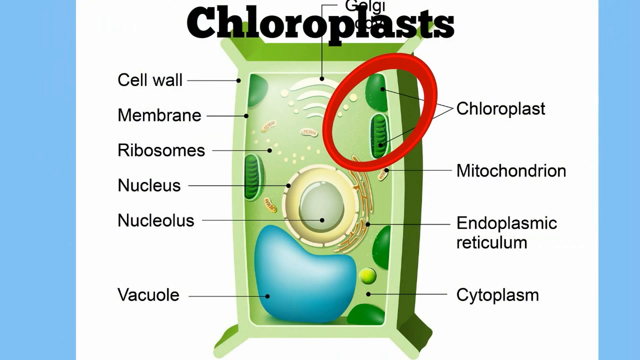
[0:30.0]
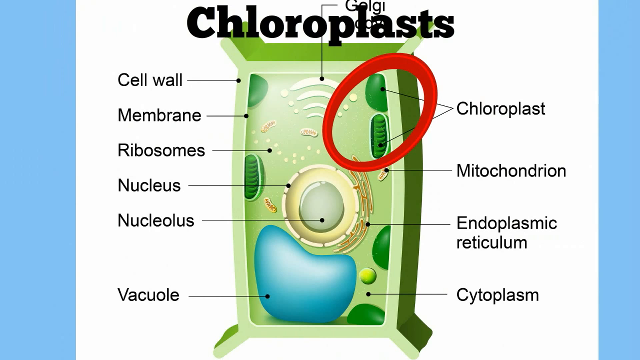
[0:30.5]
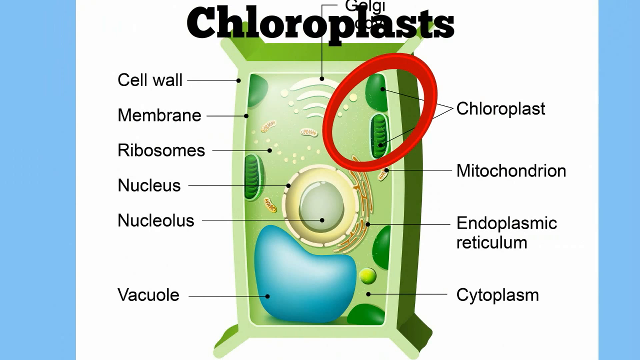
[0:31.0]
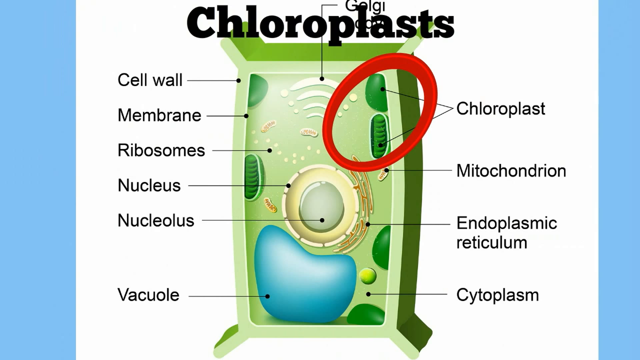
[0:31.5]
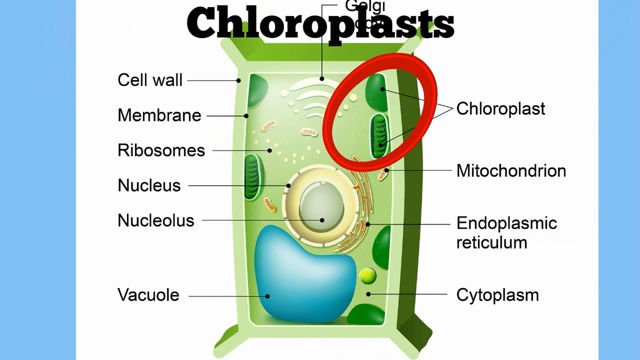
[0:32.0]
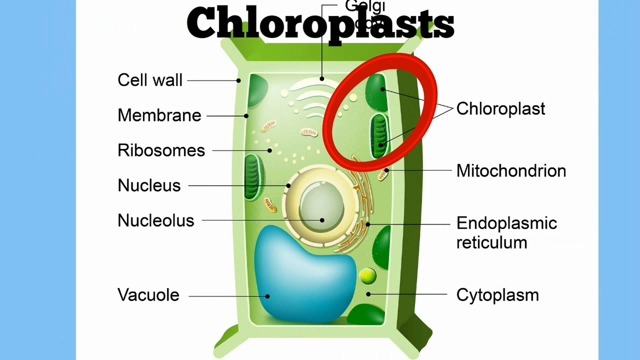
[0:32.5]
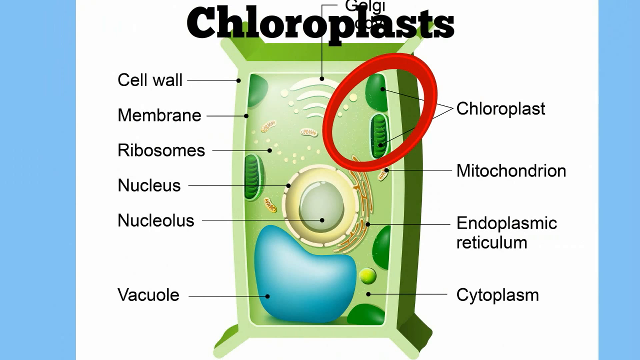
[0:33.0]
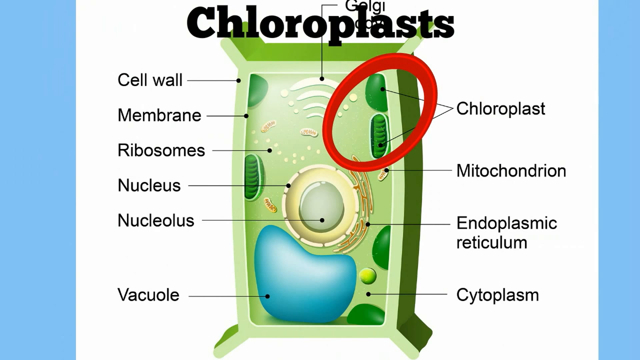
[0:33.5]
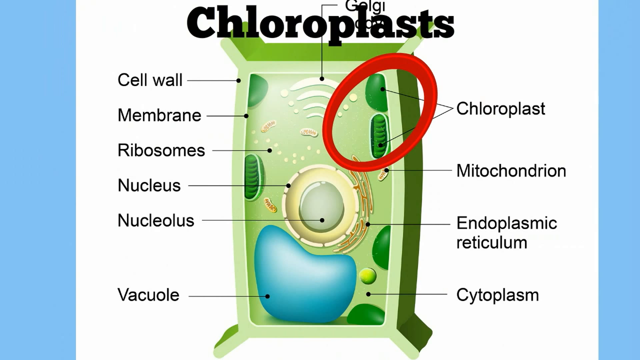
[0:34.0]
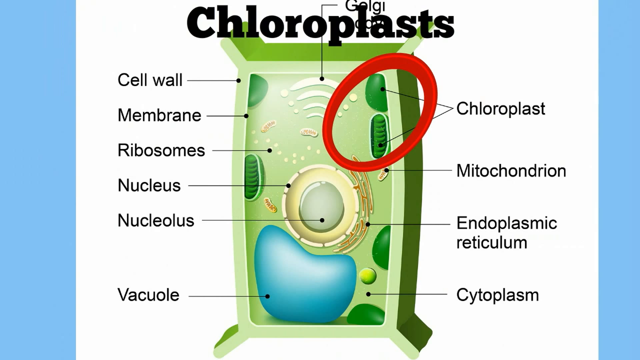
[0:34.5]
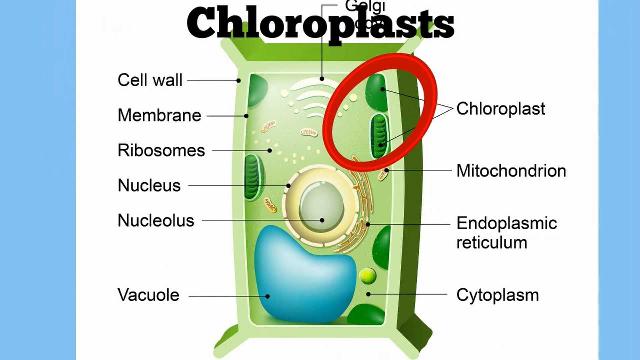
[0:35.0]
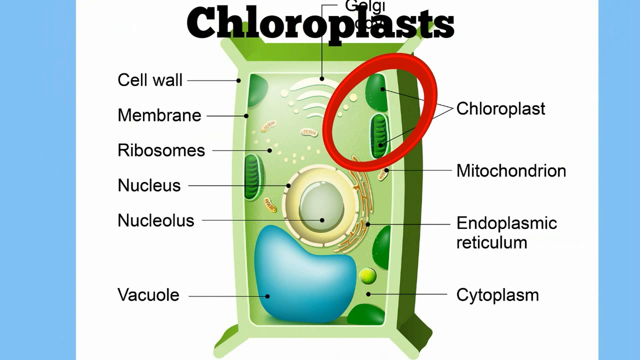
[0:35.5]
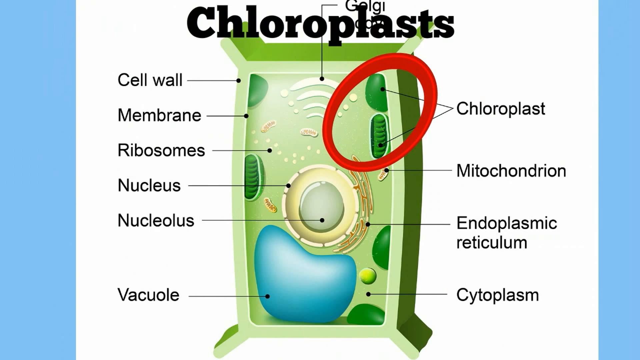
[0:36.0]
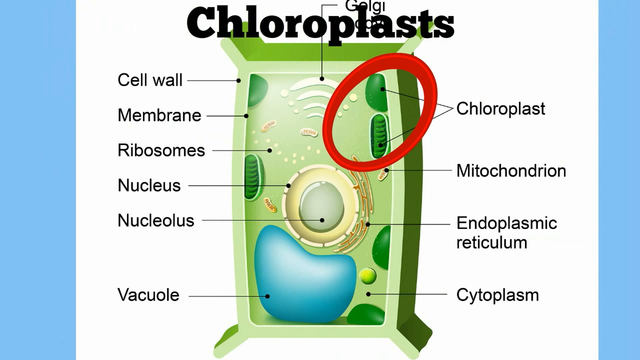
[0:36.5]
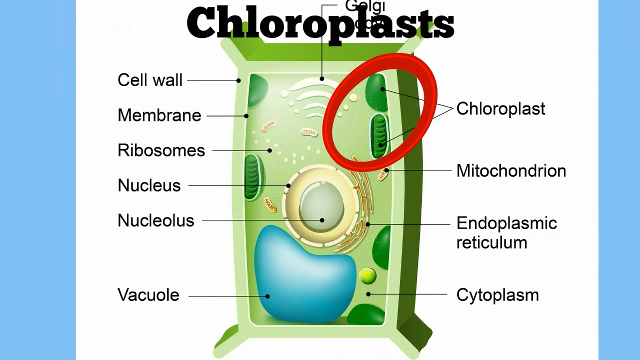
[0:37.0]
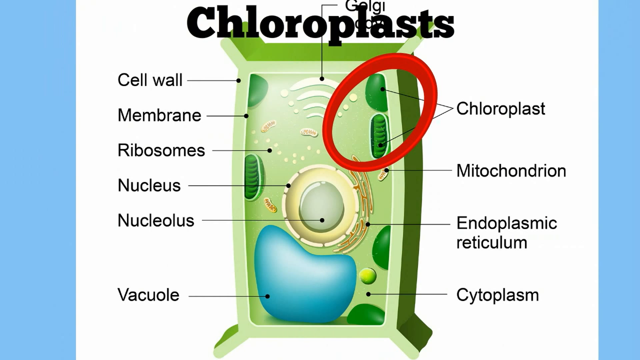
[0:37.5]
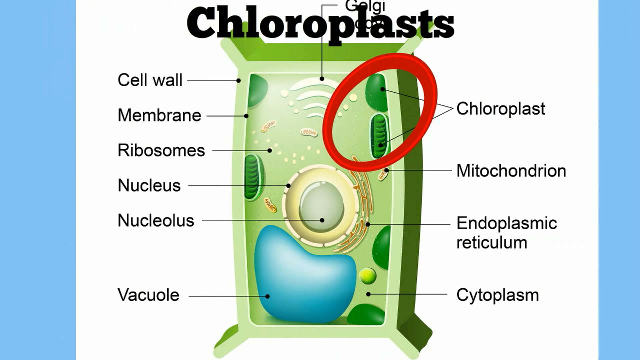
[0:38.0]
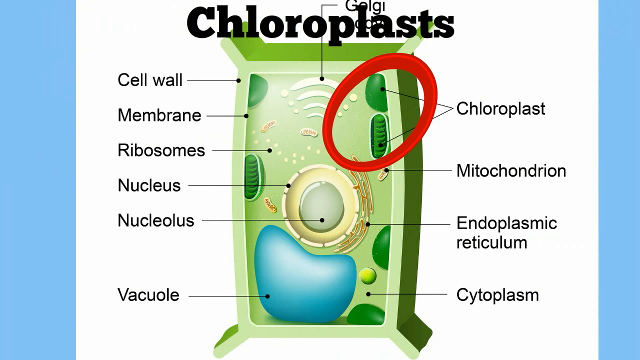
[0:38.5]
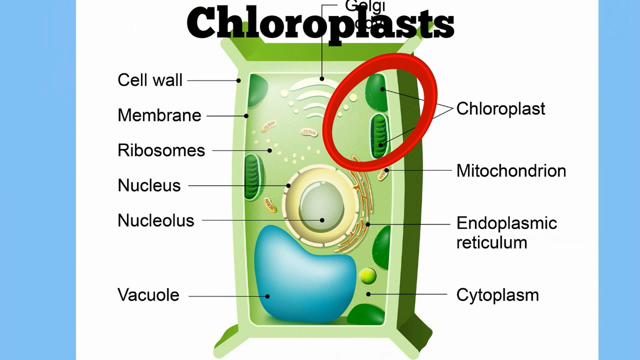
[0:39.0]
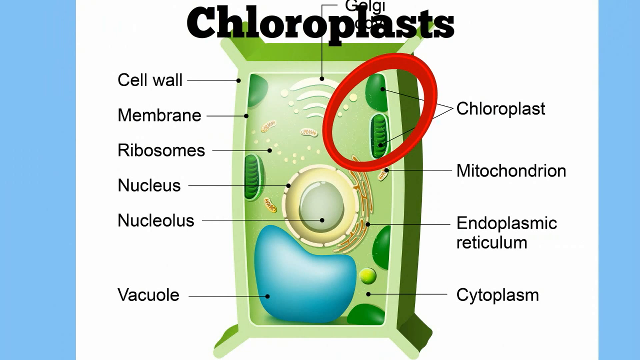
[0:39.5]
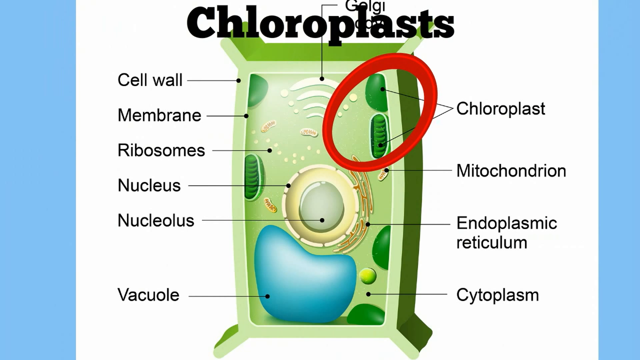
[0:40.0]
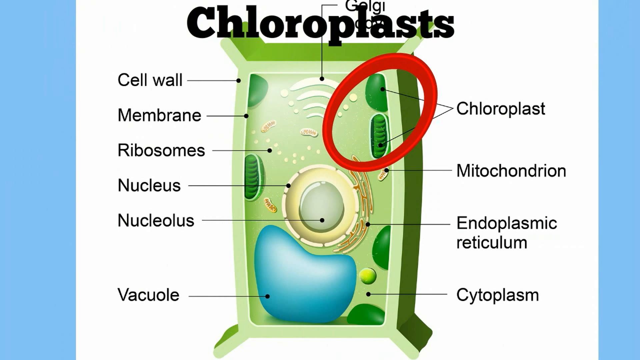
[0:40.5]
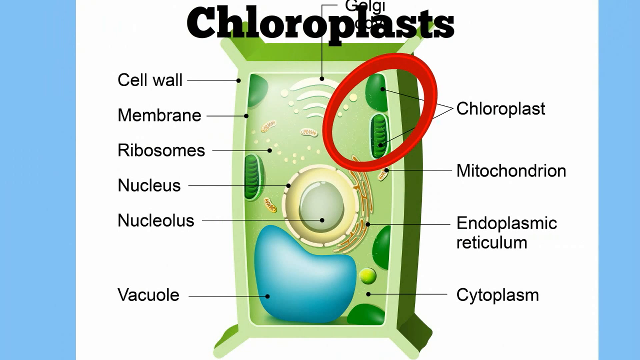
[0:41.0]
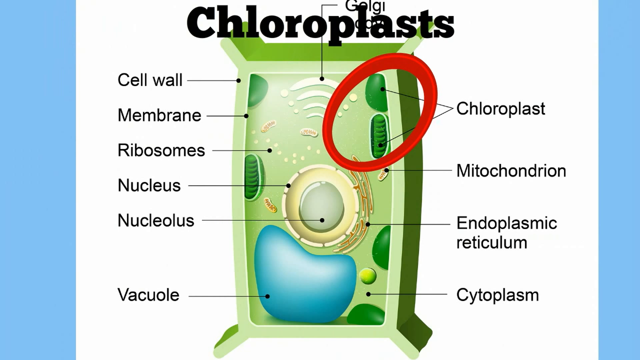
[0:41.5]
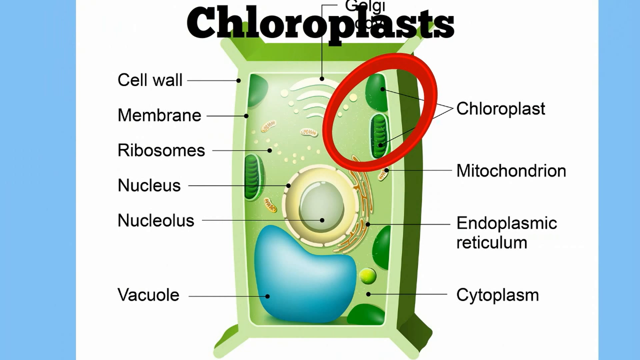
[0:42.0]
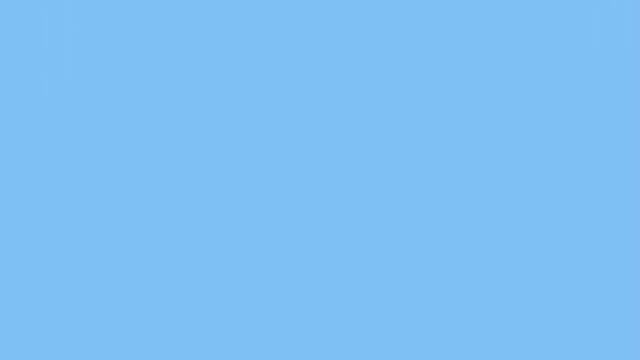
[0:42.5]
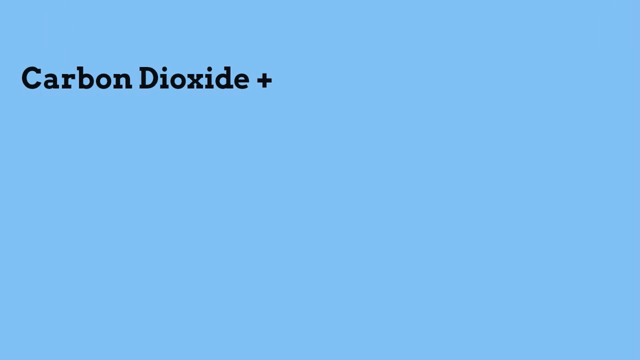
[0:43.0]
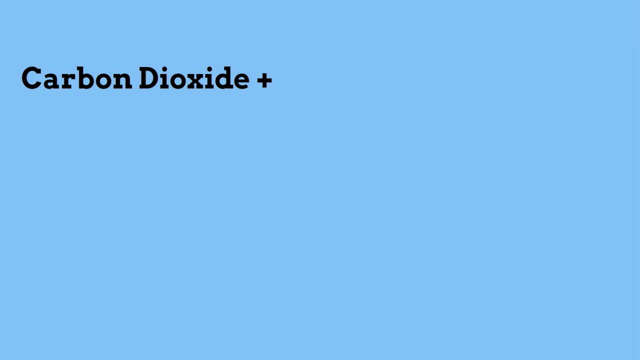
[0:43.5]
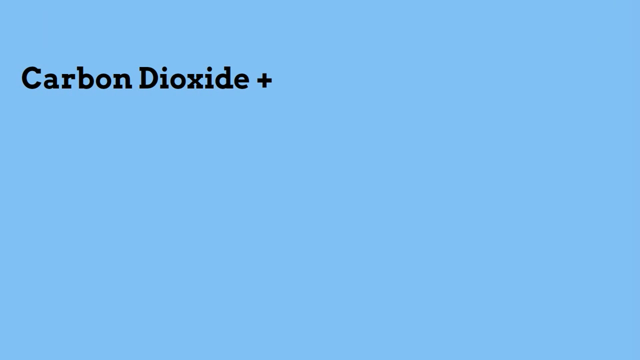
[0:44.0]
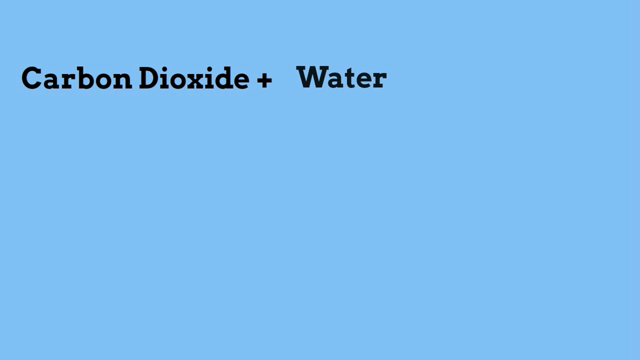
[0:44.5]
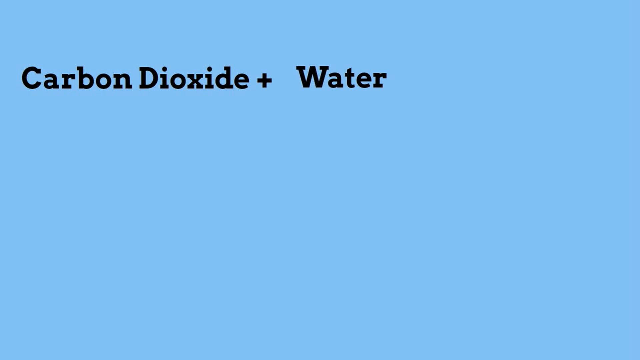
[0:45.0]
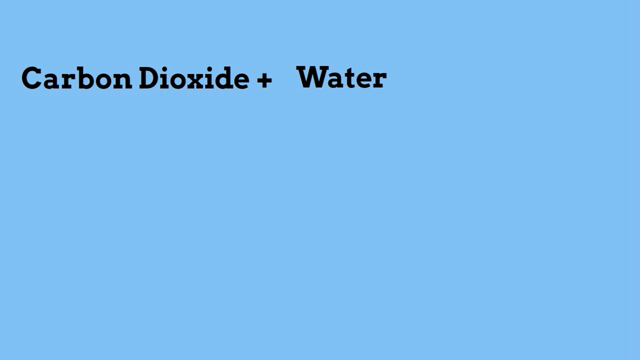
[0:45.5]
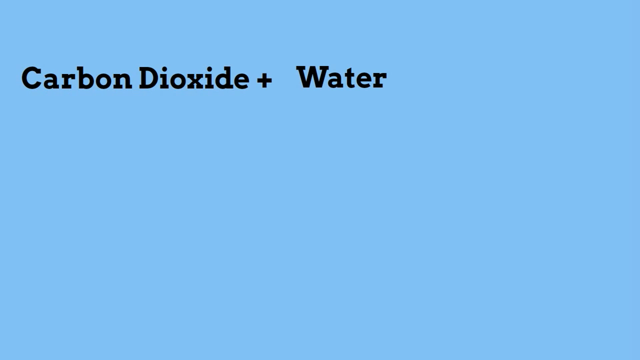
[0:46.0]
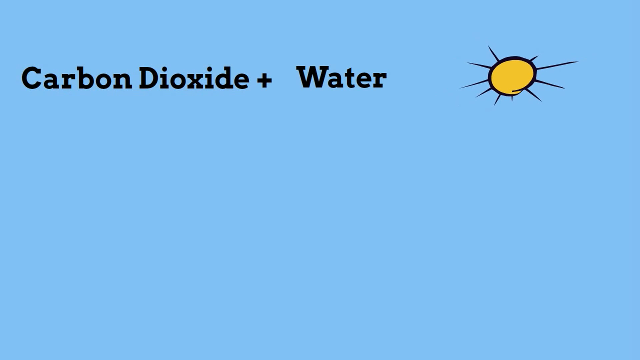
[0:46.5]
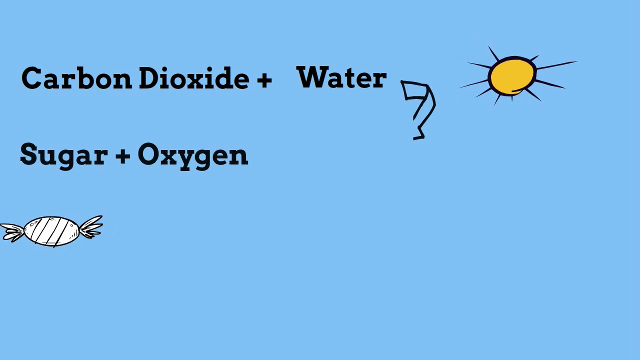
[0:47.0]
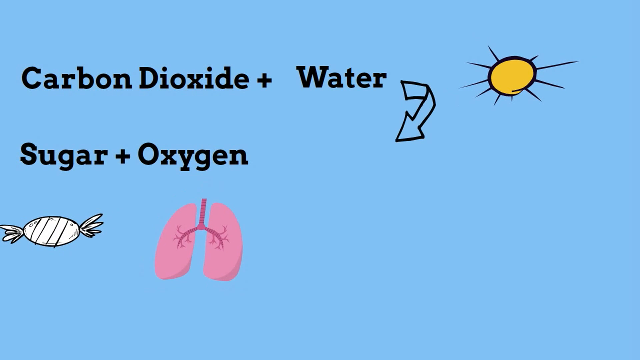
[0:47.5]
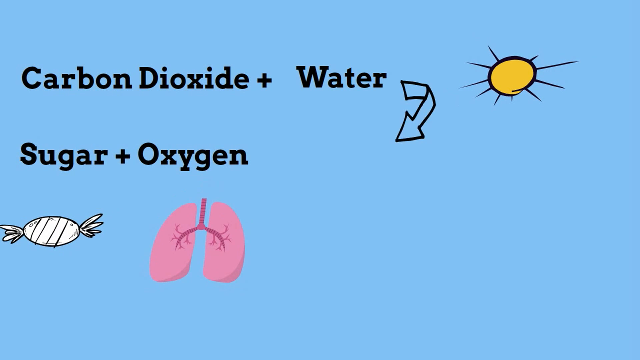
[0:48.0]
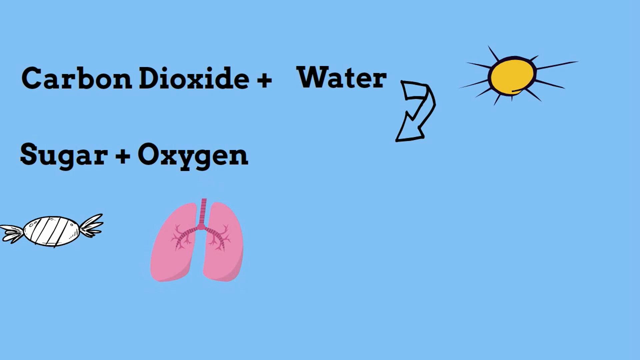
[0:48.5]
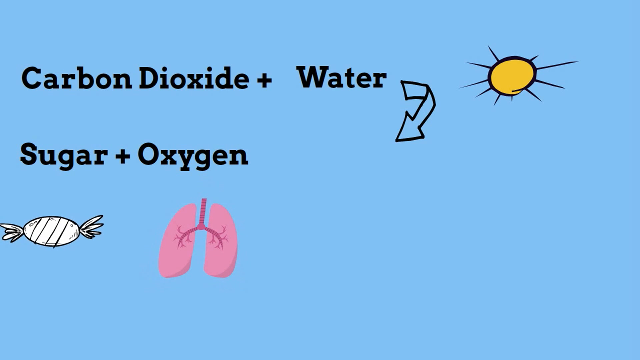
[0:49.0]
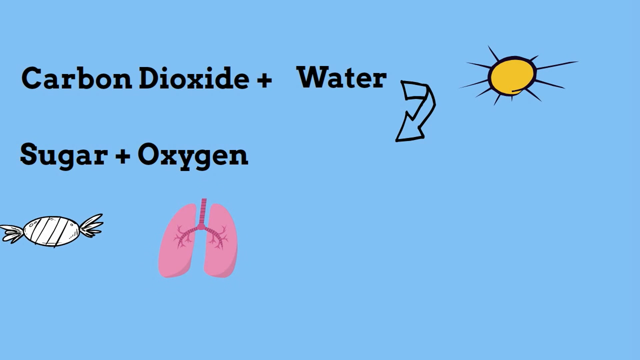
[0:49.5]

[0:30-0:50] The same diagram with all its labels stays on screen, then the video goes to a blue screen that begins to fill with black text. At the top it reads "carbon dioxide + water," with an arrow pointing down below it; the arrow has a black outline and is blue inside to match the background. Next to it is a yellow sun with a black circle around it and black lines coming out of it. Below that, also in black, it reads "sugar + oxygen." Below that is a black-and-white piece of candy, and below that a small graphic of lungs. There is nothing else on the screen. The plus between carbon dioxide and water sits much closer to "carbon dioxide," while "sugar" and "oxygen" are more evenly spaced.